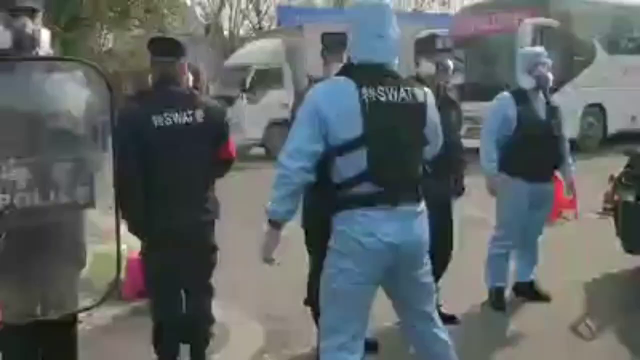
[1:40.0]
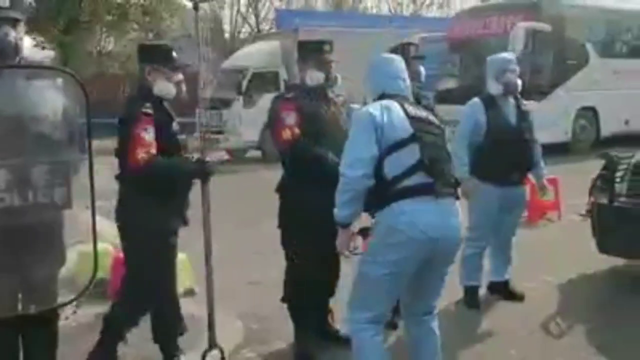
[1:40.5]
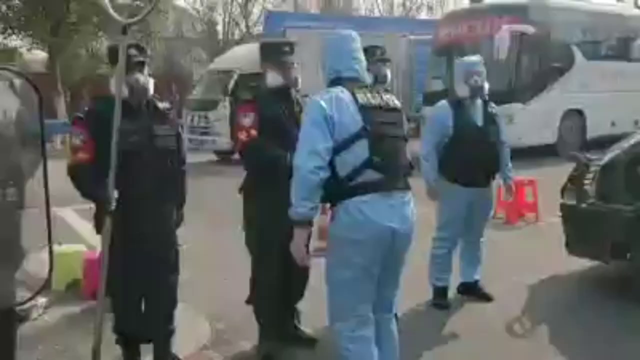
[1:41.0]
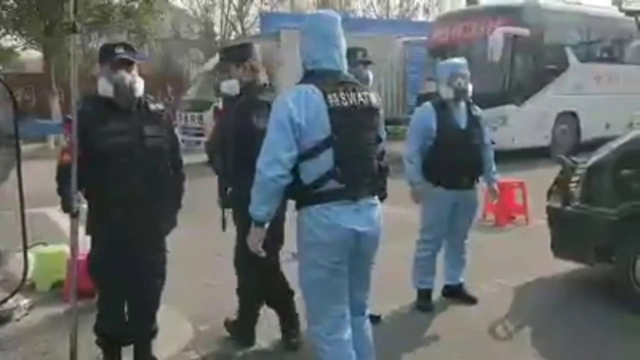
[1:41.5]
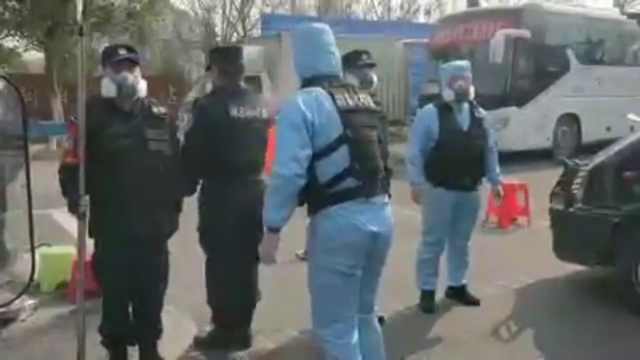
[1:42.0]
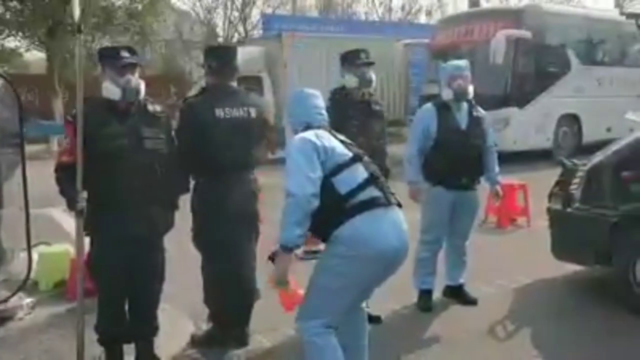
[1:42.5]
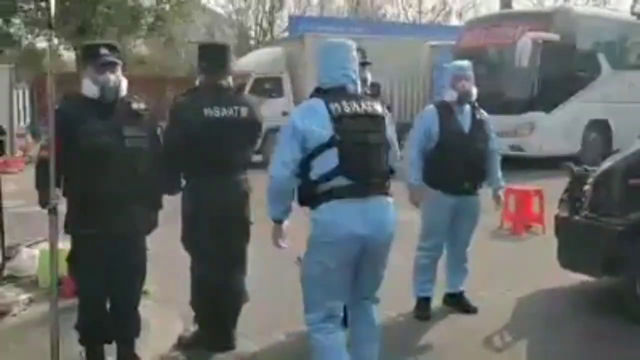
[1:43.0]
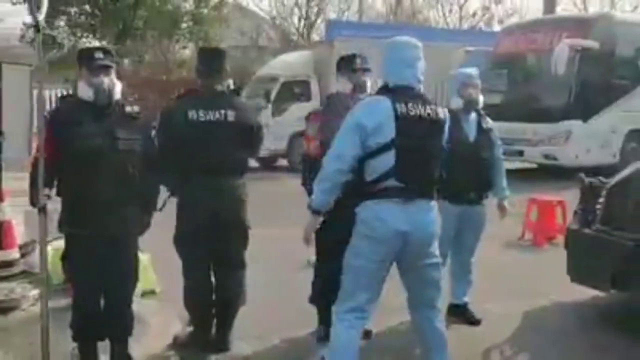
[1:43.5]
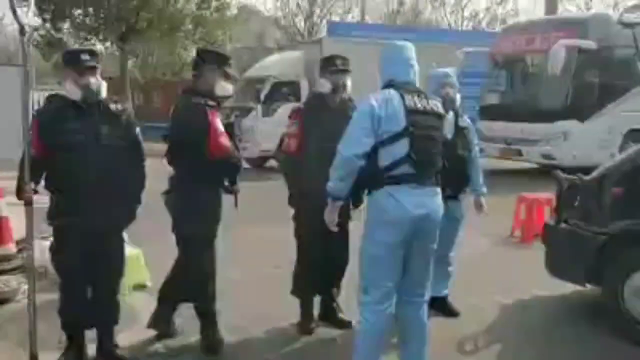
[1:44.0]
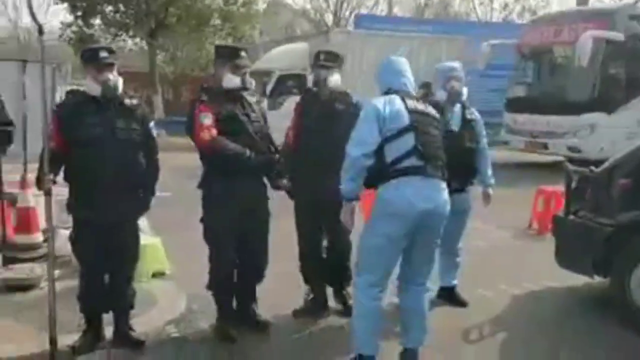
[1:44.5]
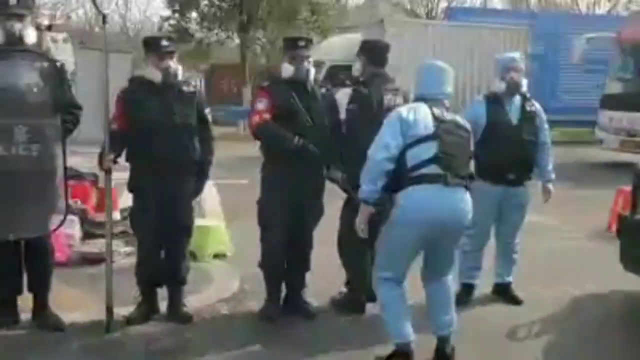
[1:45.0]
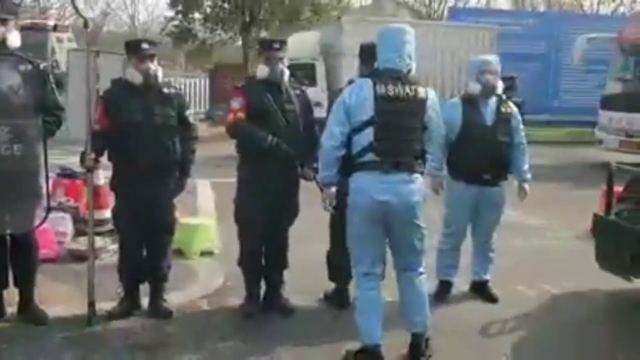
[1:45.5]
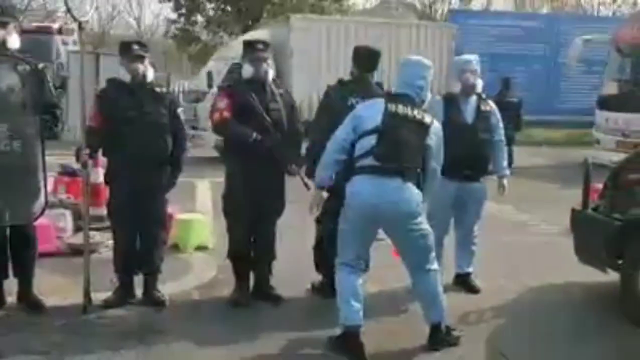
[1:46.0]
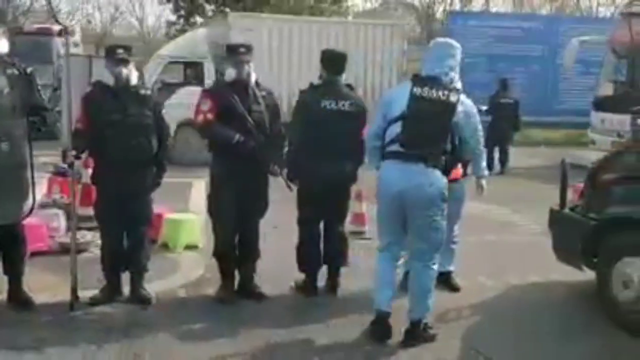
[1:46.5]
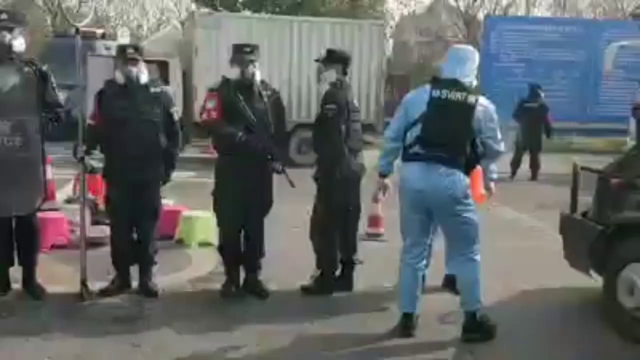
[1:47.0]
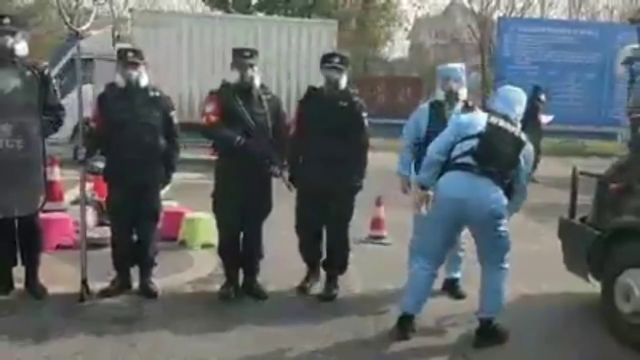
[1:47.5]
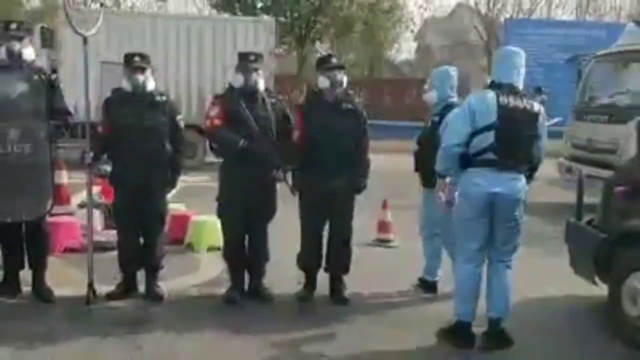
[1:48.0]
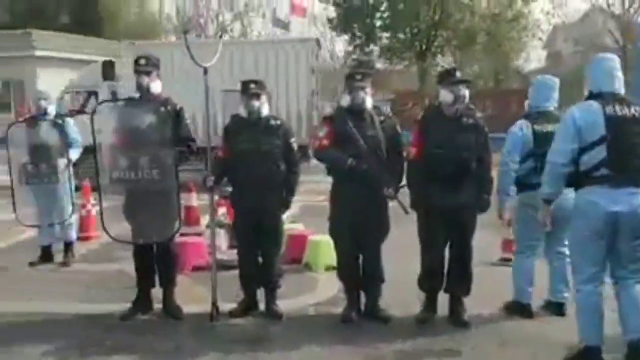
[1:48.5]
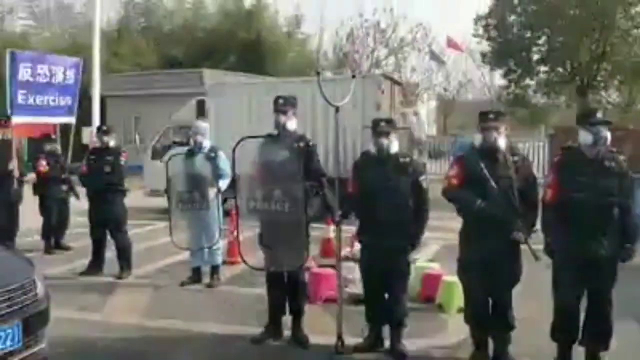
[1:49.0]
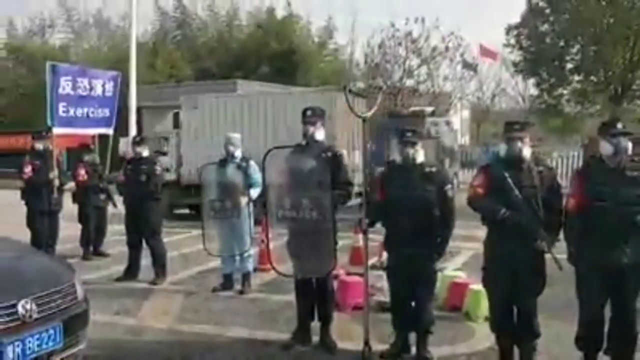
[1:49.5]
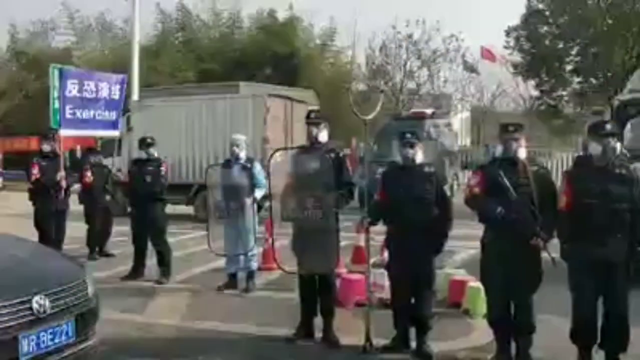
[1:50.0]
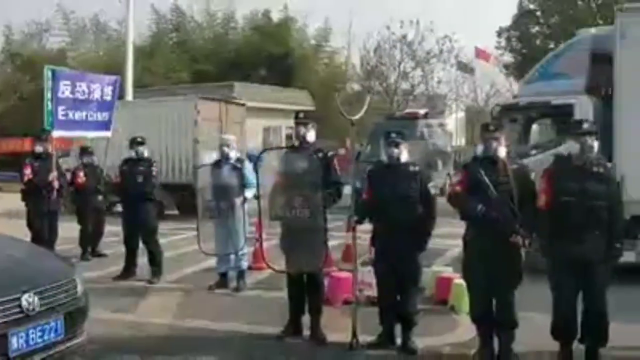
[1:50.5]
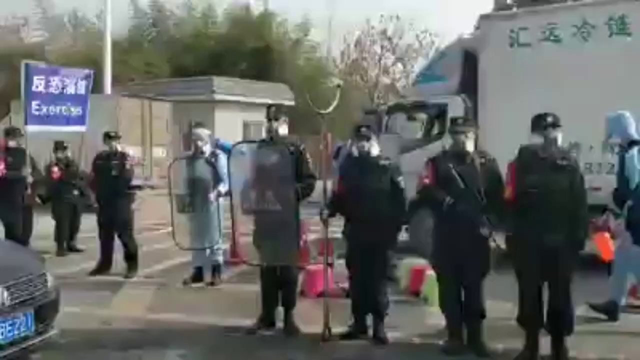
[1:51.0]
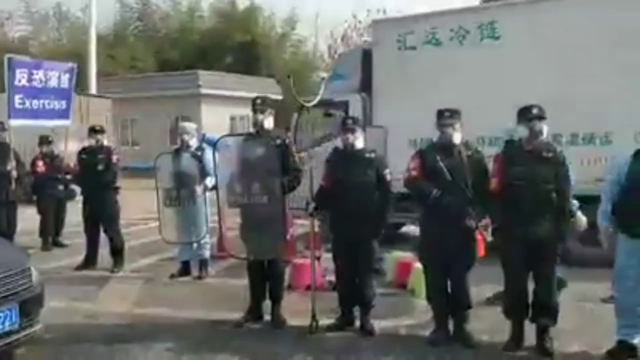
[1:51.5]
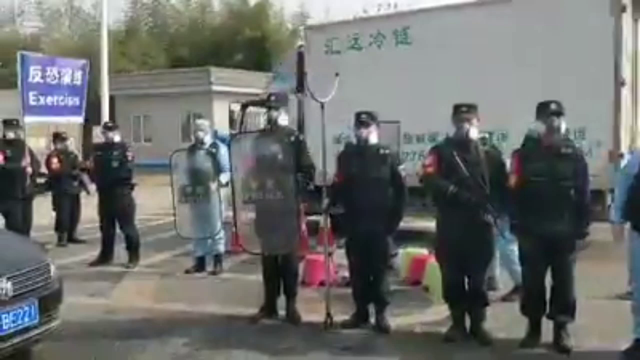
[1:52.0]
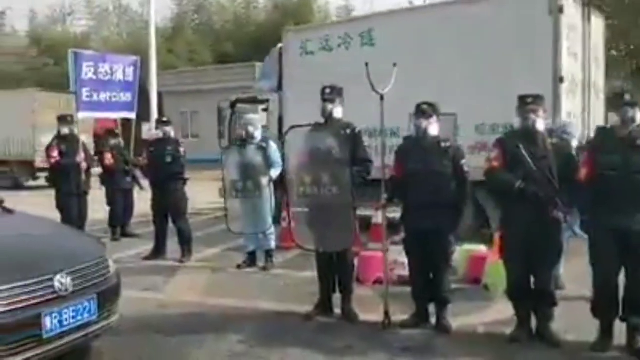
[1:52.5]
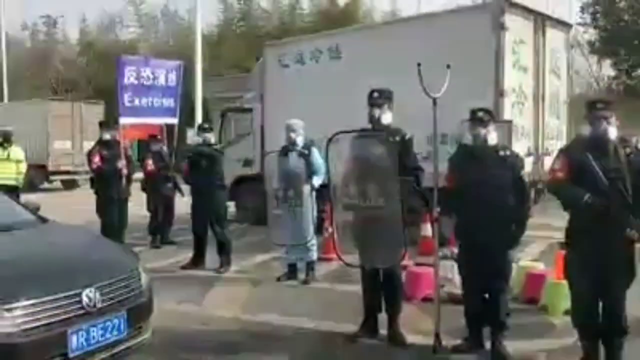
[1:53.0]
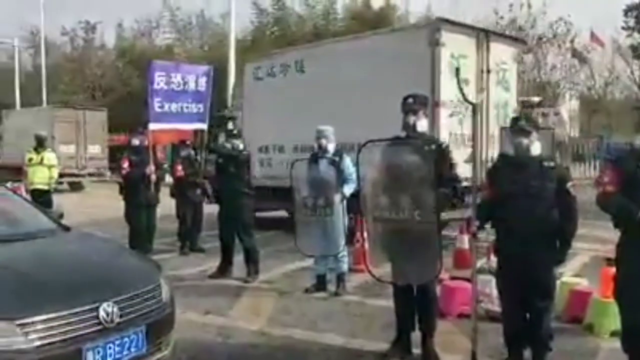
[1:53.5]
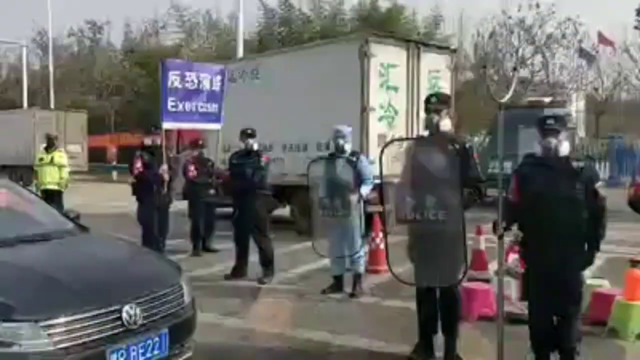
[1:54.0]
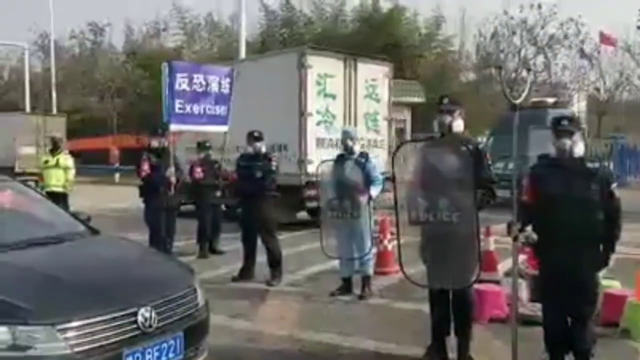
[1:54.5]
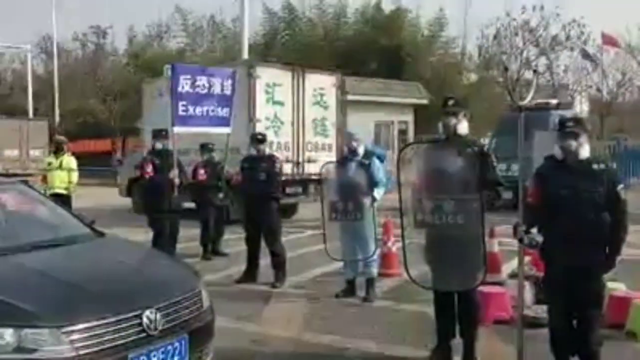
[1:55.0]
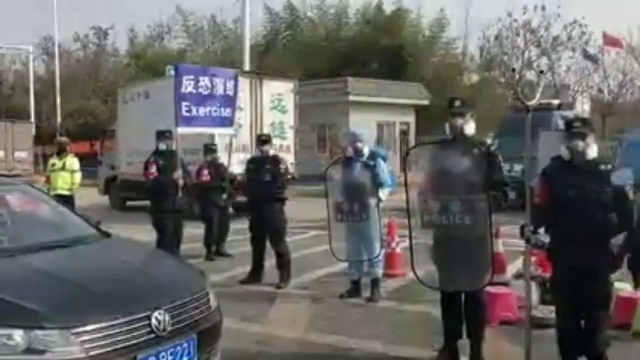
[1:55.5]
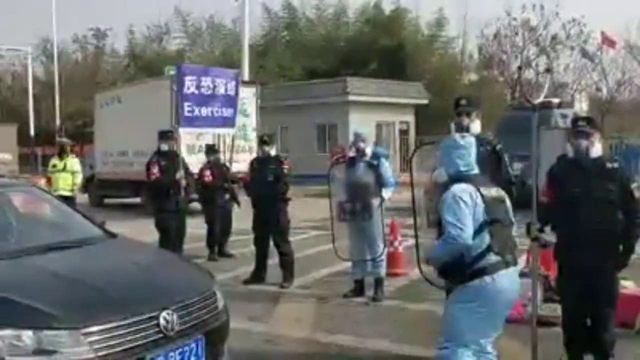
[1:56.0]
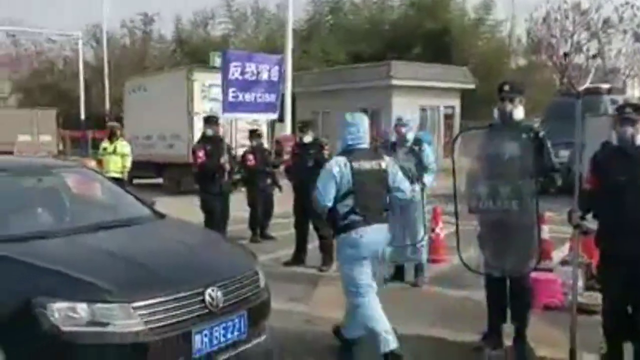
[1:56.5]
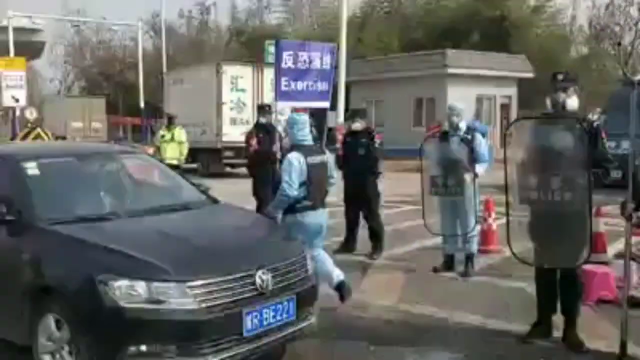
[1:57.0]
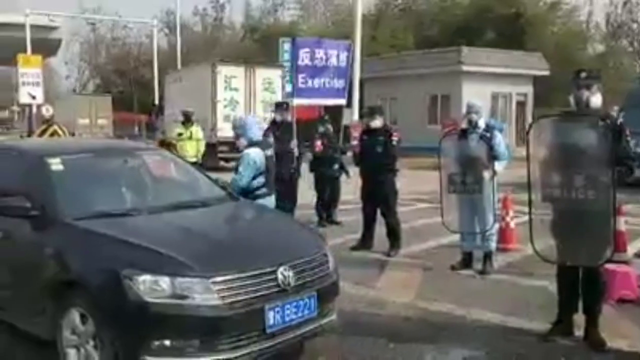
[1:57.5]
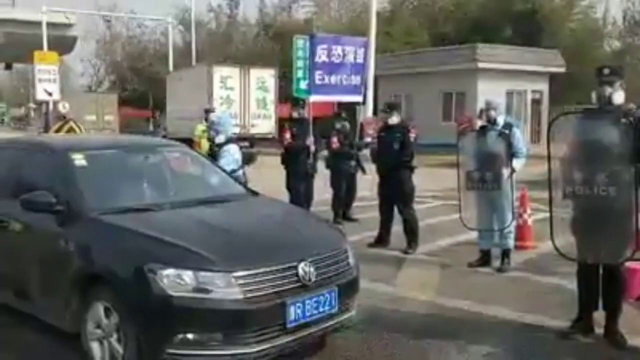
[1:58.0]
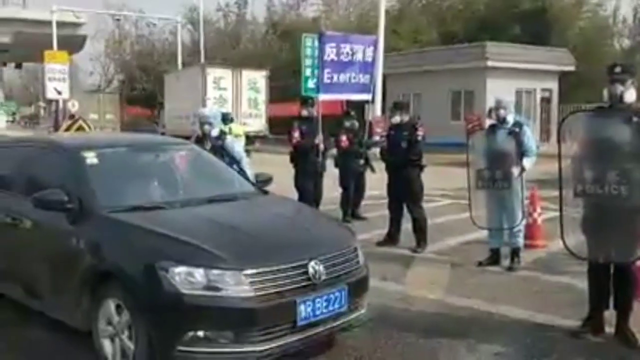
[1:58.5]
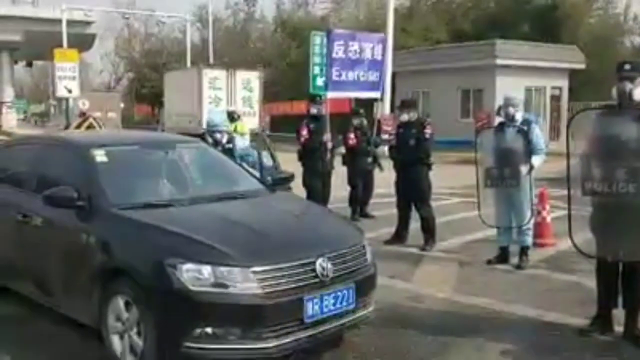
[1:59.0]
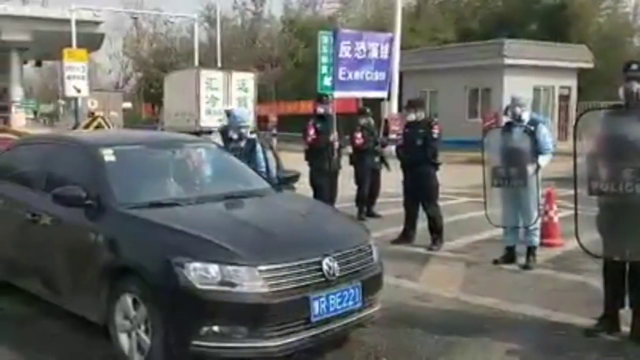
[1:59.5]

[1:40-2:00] SWAT team members stand around, some in light blue full-body jumpsuits and others in black full-body uniforms, some with shields in front of them. The person in the blue jumpsuit sprays down the people standing in a line, who turn around after being sprayed. Several of them hold guns. A big box truck travels behind them from the right-hand side to the left-hand side of the screen. A black VW car is on the left-hand side of the screen. The person in the blue jumpsuit with the sprayer then jogs over to the VW and gets in the driver's seat. There are trees in the background. It looks to be an overcast but overall clear day. Several other big cars are in the background, and there is an overpass on the left-hand side in the background. The police officers are all wearing armor shields.